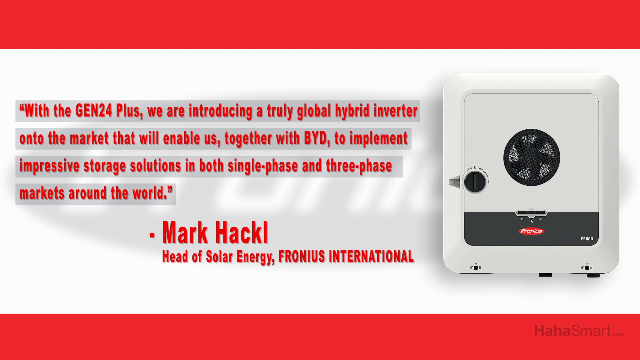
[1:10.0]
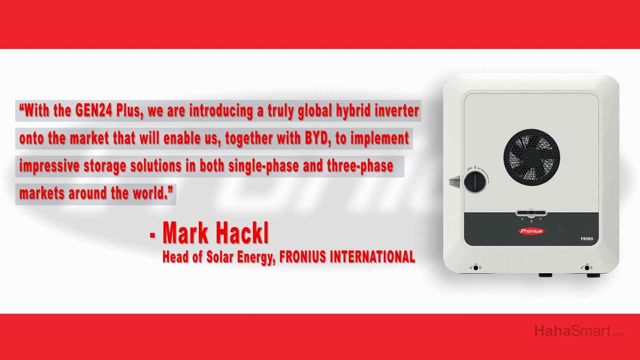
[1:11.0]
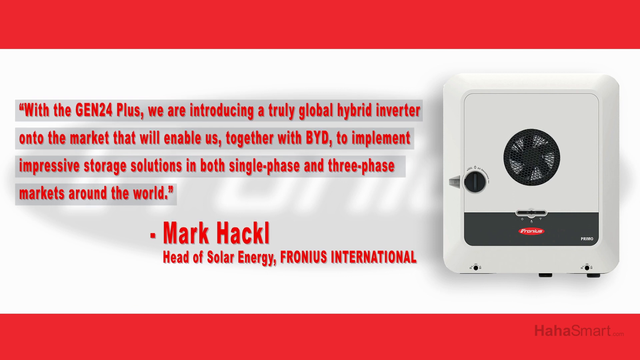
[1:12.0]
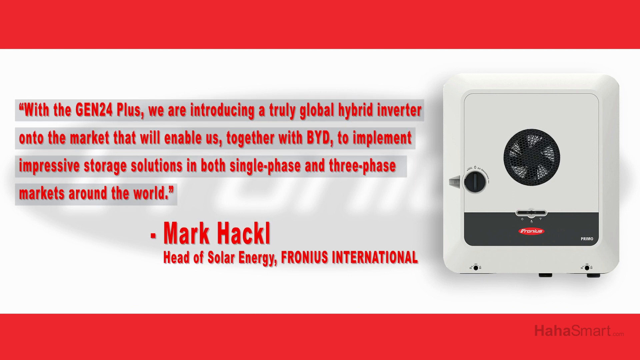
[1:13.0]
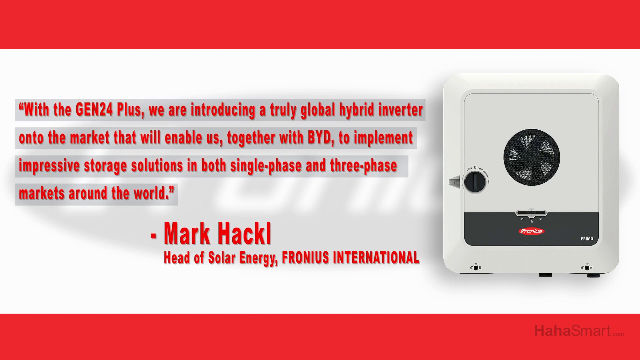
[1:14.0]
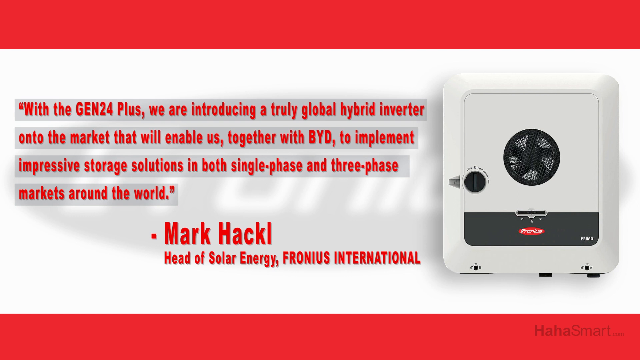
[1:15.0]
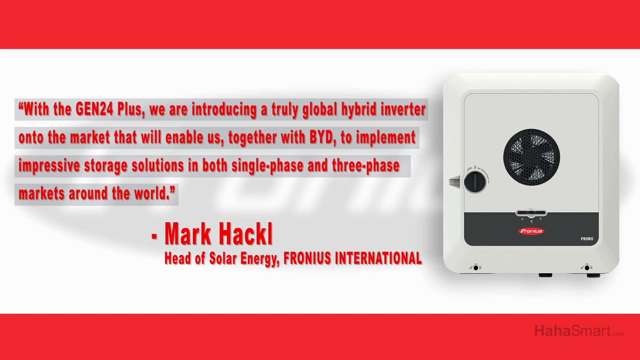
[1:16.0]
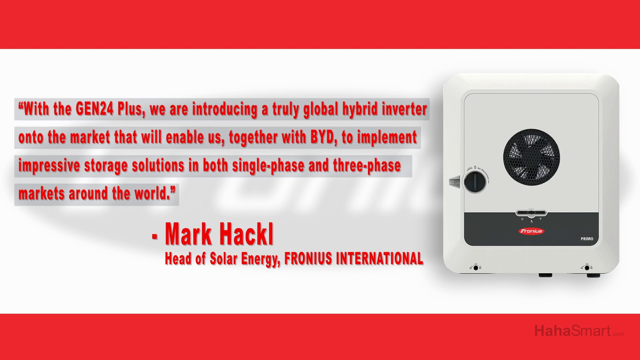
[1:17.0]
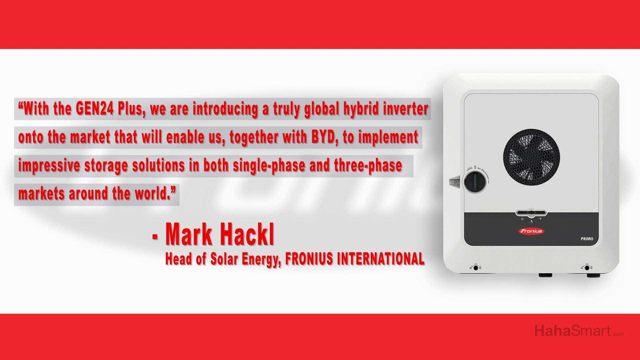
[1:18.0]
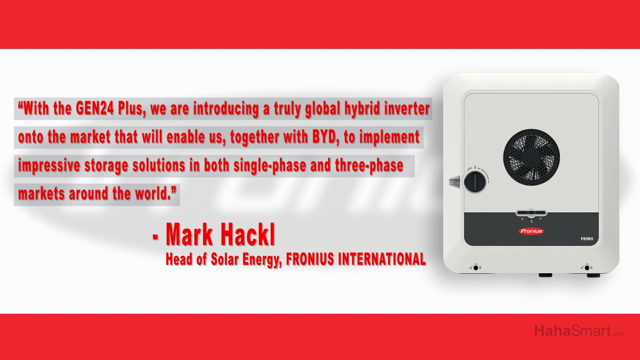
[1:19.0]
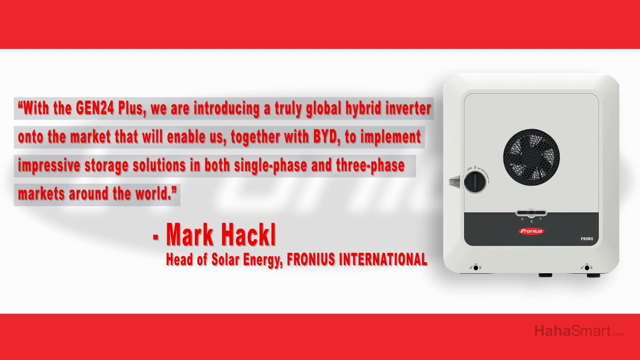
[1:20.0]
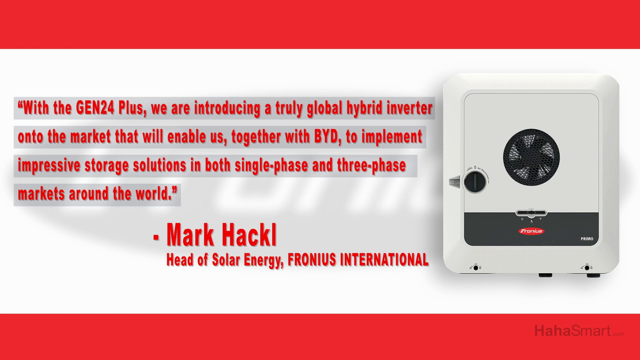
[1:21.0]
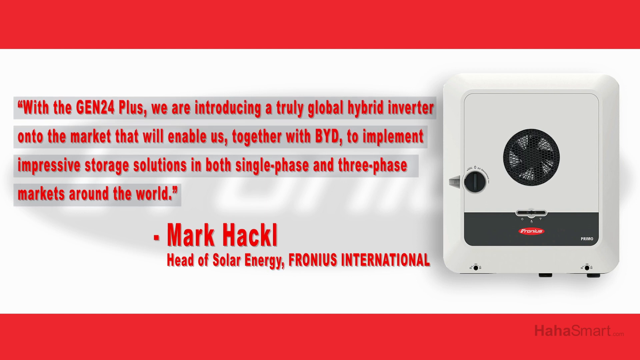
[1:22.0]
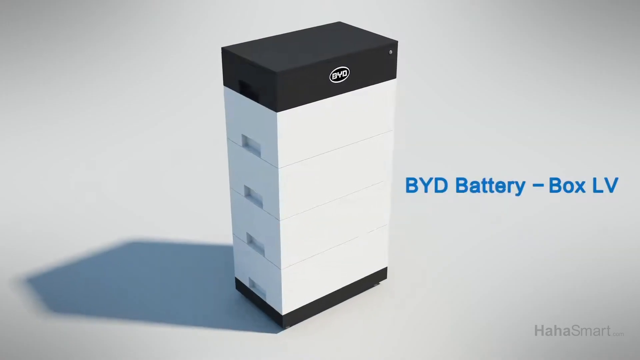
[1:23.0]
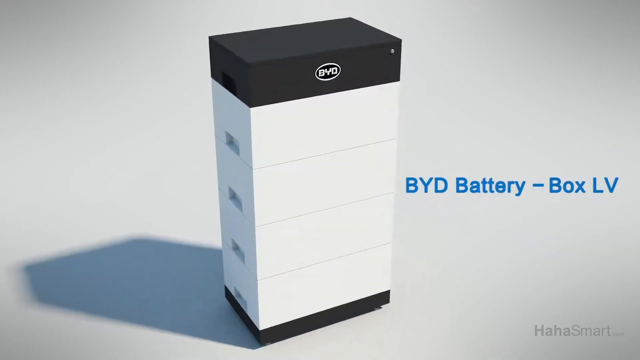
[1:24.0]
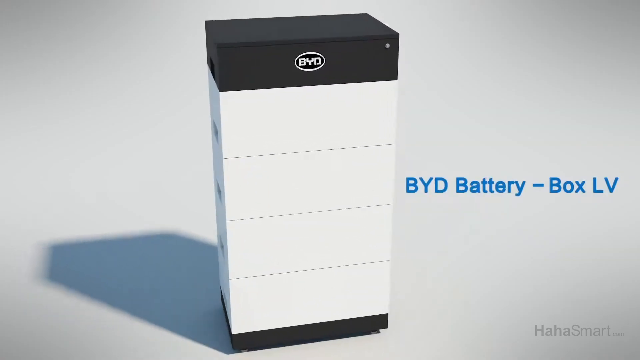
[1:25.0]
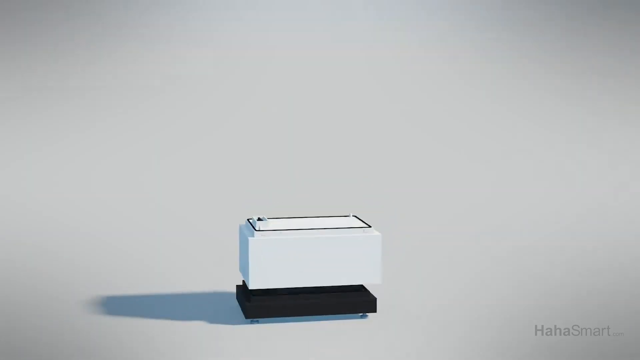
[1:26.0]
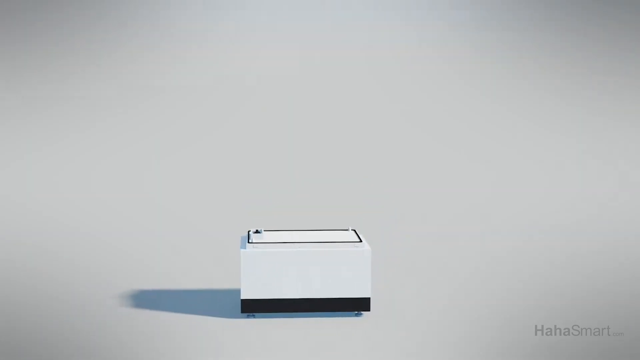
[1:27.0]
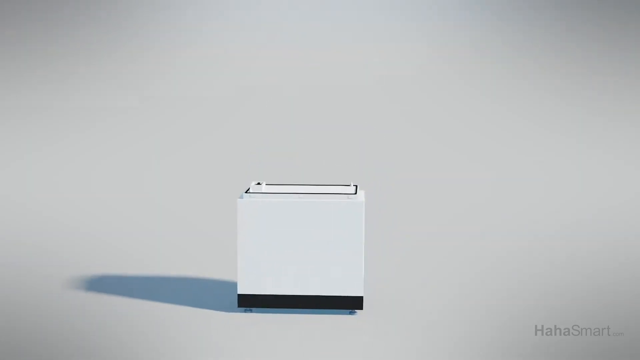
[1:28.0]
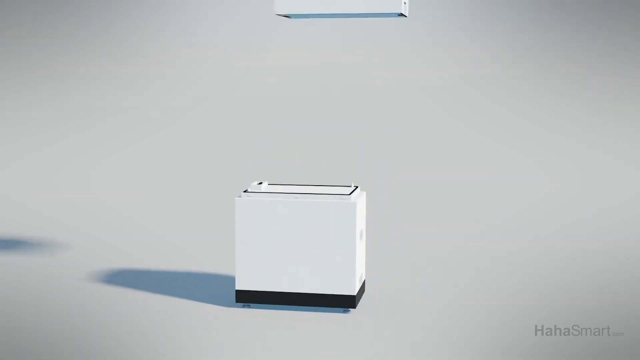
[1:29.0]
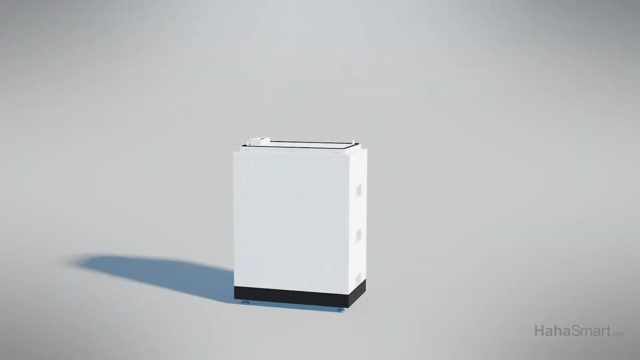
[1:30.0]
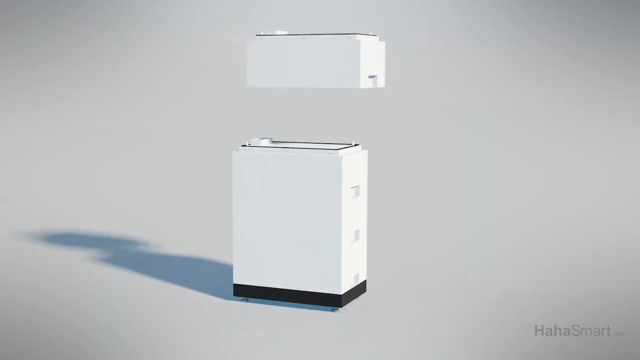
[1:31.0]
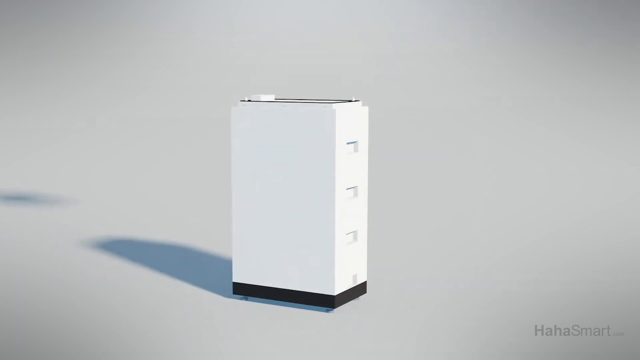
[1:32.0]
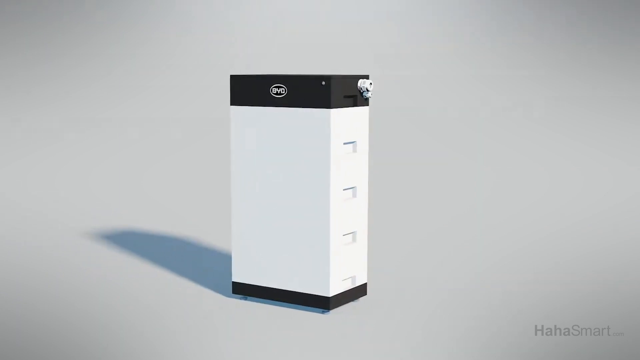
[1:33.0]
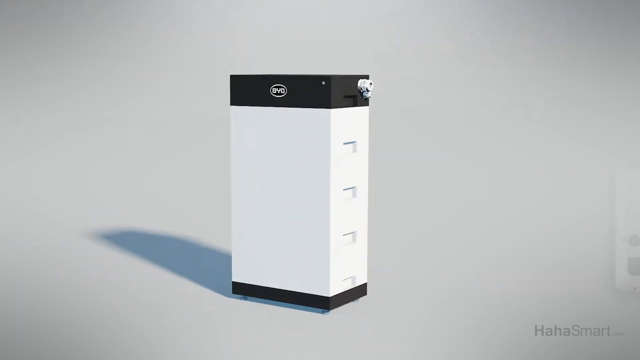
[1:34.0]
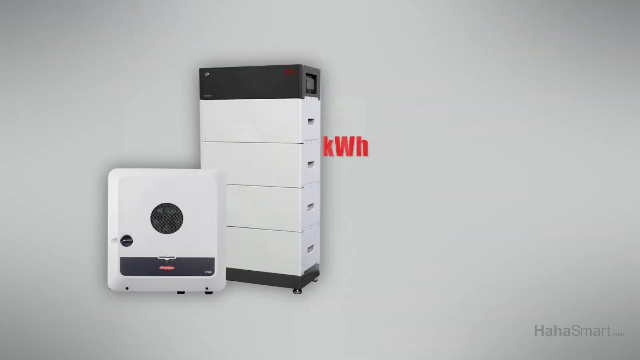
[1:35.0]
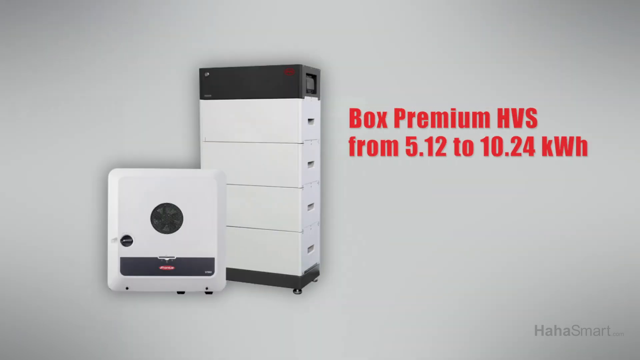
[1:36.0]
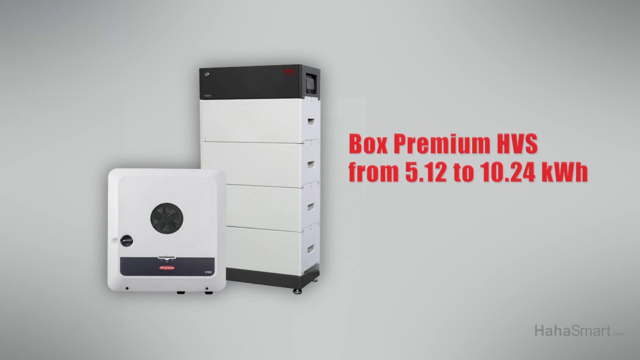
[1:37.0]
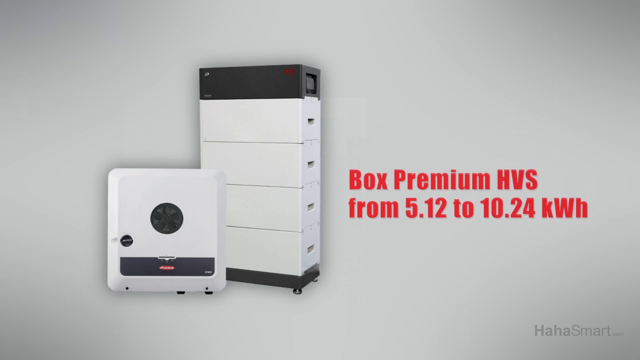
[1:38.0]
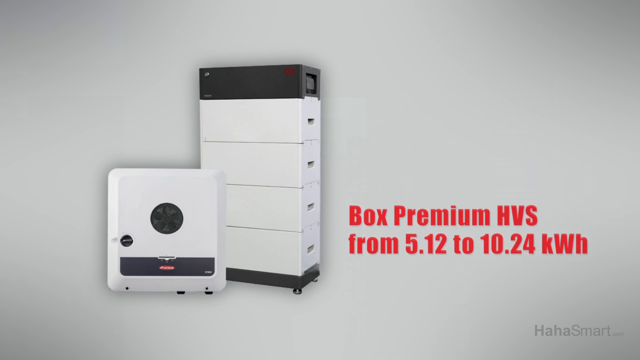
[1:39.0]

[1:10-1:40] Red quoted text, highlighted in gray, is on a white background and reads "With the Gen 24 plus, we are introducing a truly global hybrid inverter onto the market that will enable us, together with BYD, to implement impressive storage solutions in both single-phase and three-phase markets around the world." On the right, in the inverter box, the black fan is spinning. Next comes what appears to be a digital simulation of the top of a large box: it looks like a white rectangular box, almost like a refrigerator box, with a black top, and blue text on the right side of the screen reads "BYD battery-box LV". The box spins around clockwise. On a new screen, rectangular boxes are stacked one on another until there are four of them, making up the BYD battery box. On the side, text reads "Box Premium HVS from 5.12 to 10.24 kWh". That text moves down to the bottom of the screen, and new red text comes across the screen from left to right.